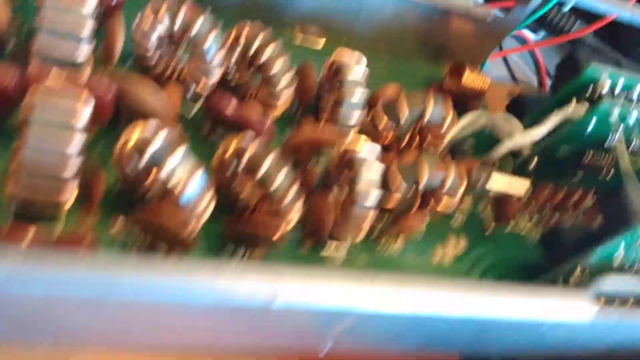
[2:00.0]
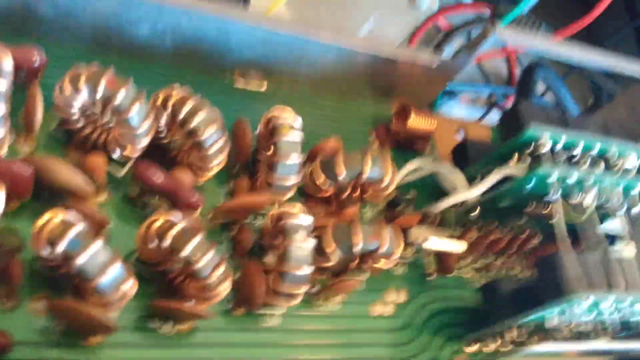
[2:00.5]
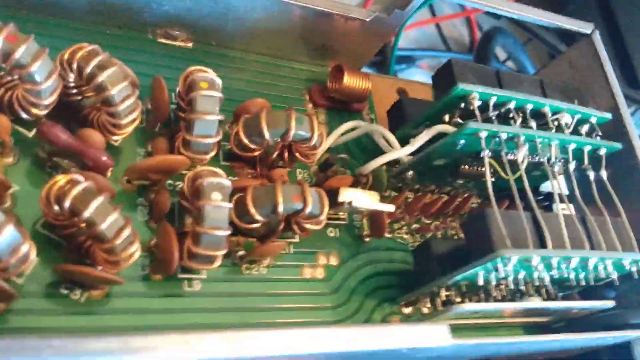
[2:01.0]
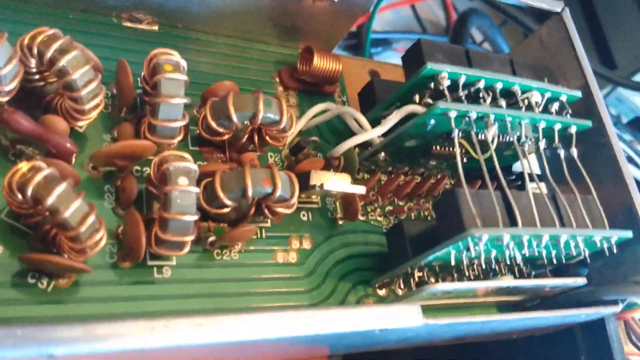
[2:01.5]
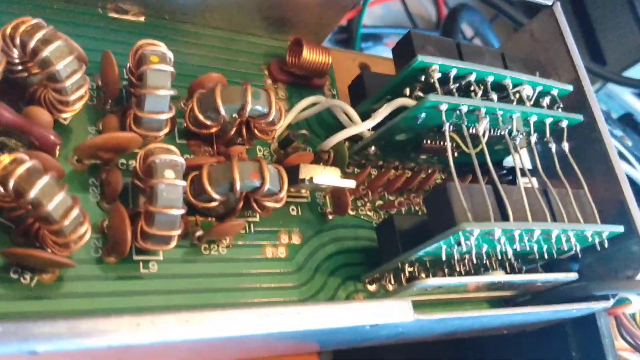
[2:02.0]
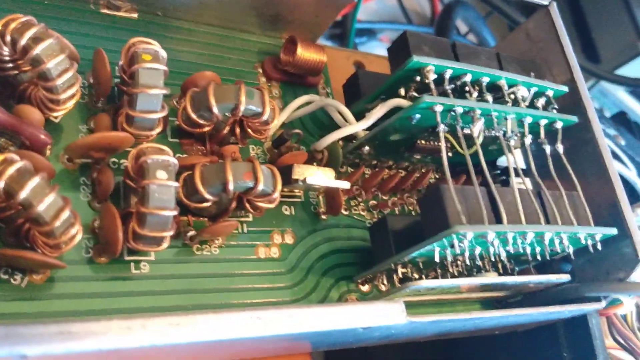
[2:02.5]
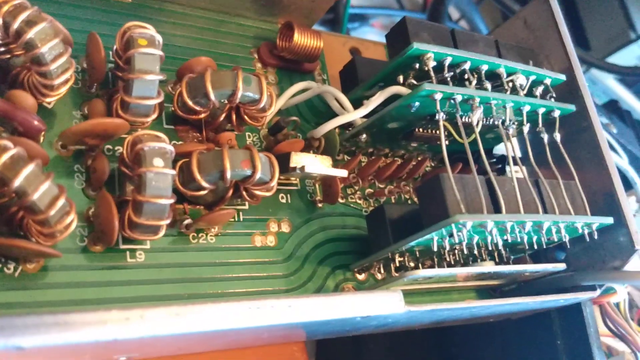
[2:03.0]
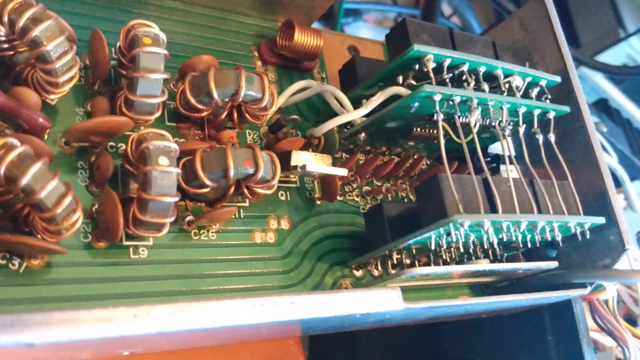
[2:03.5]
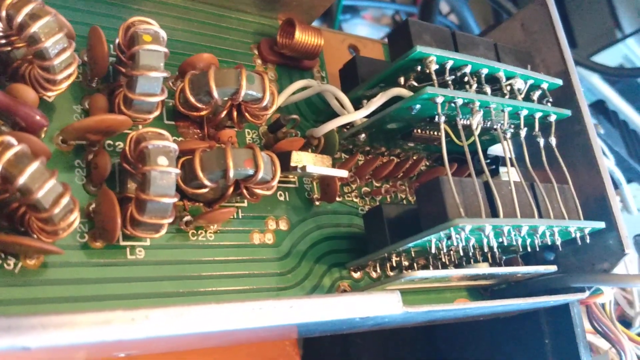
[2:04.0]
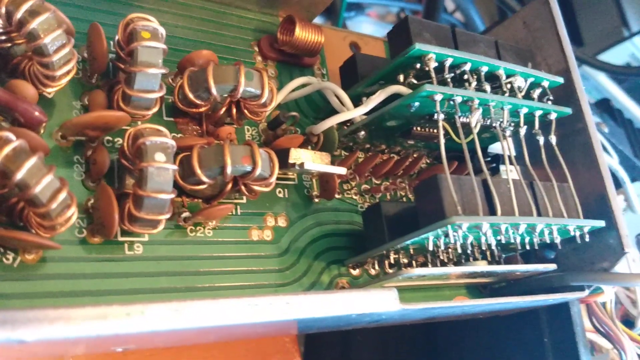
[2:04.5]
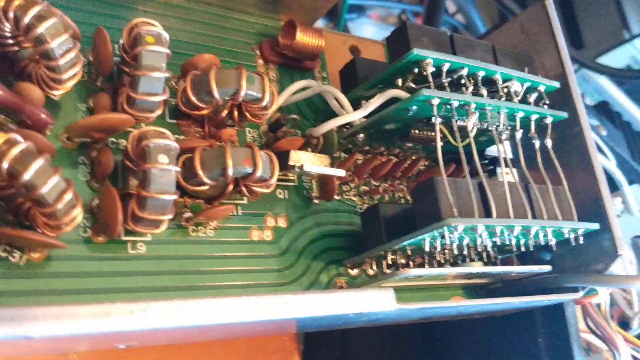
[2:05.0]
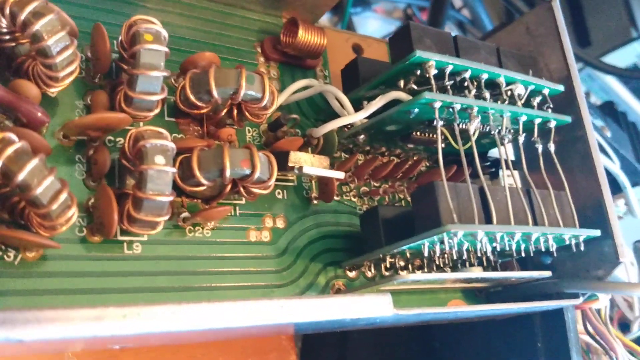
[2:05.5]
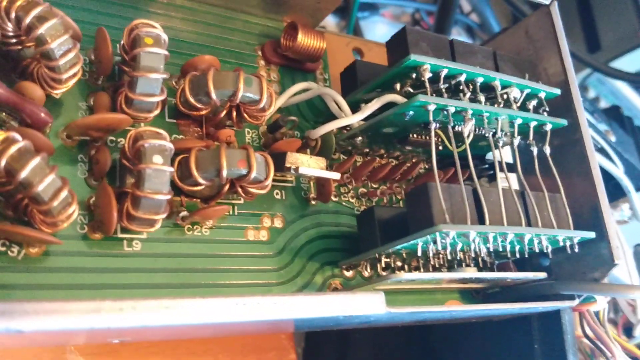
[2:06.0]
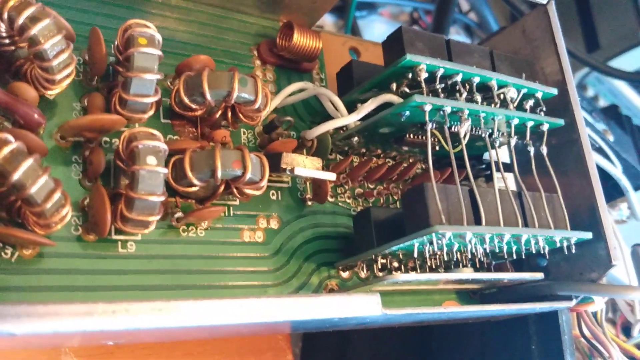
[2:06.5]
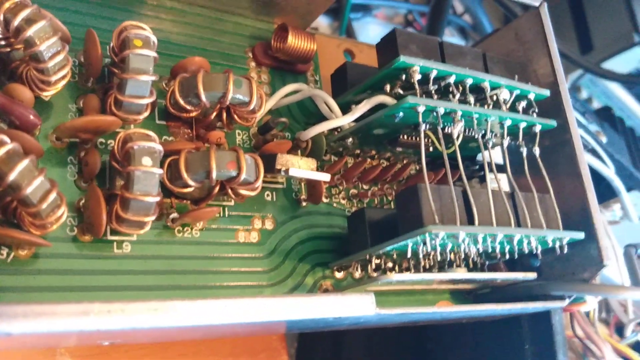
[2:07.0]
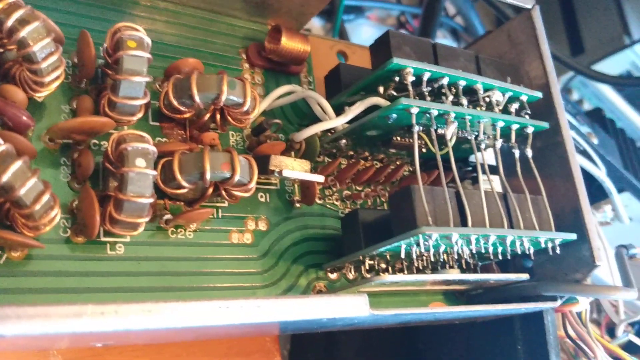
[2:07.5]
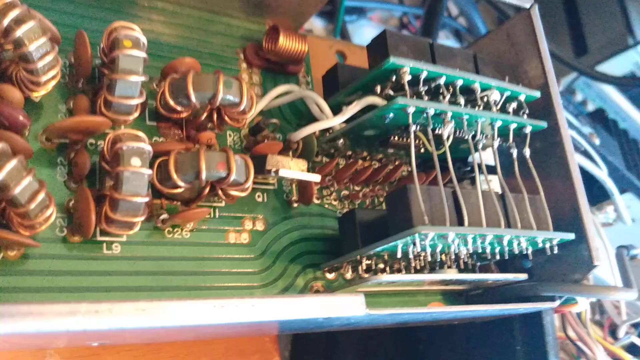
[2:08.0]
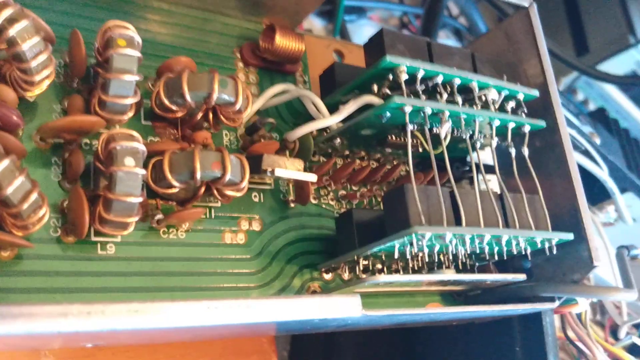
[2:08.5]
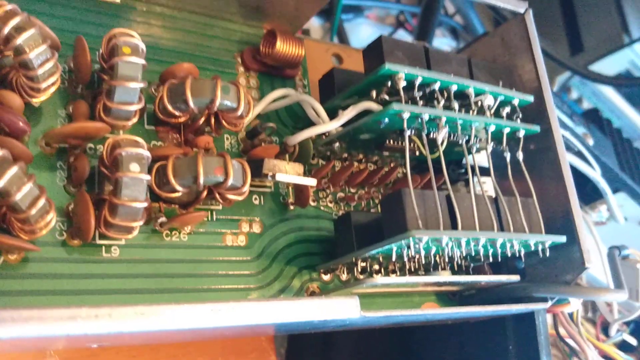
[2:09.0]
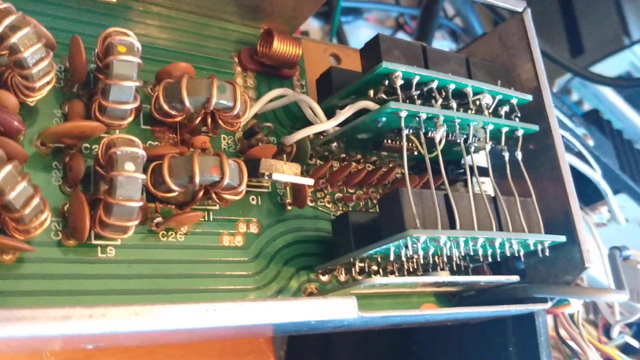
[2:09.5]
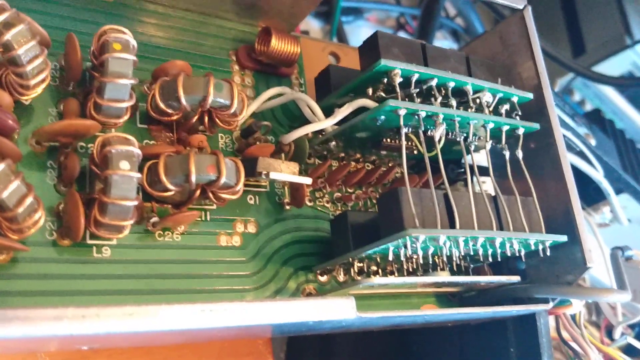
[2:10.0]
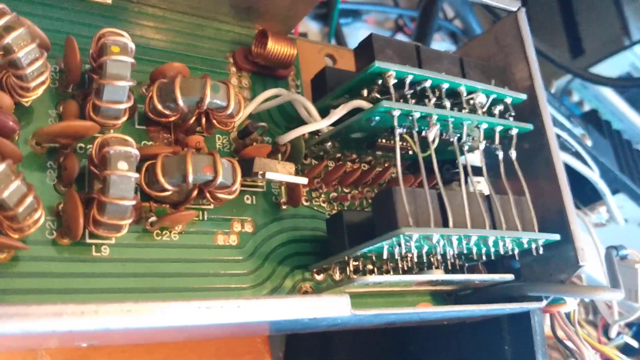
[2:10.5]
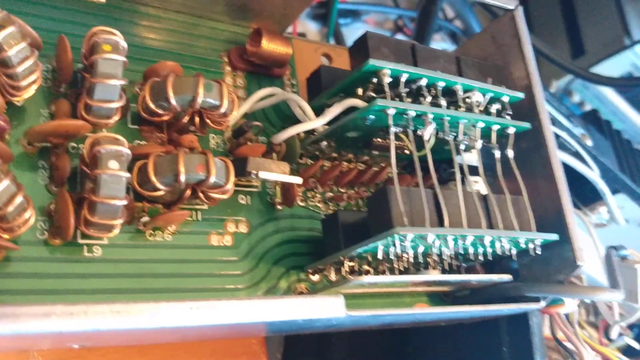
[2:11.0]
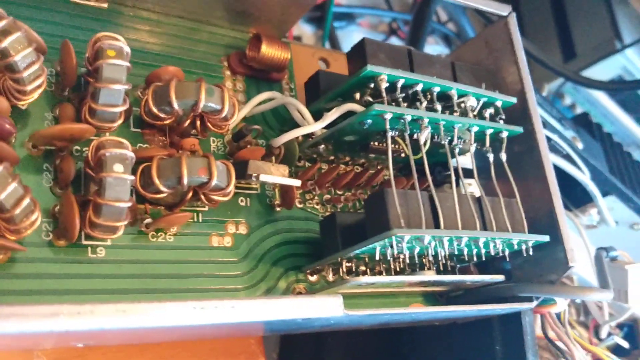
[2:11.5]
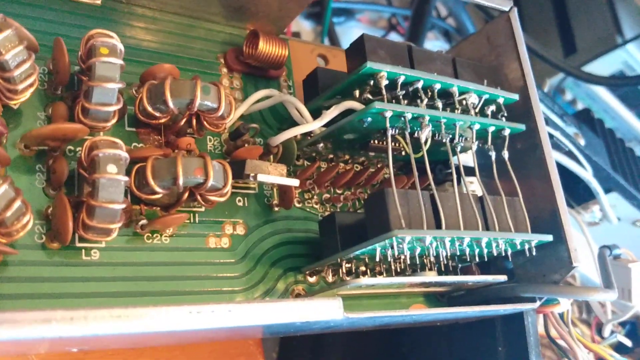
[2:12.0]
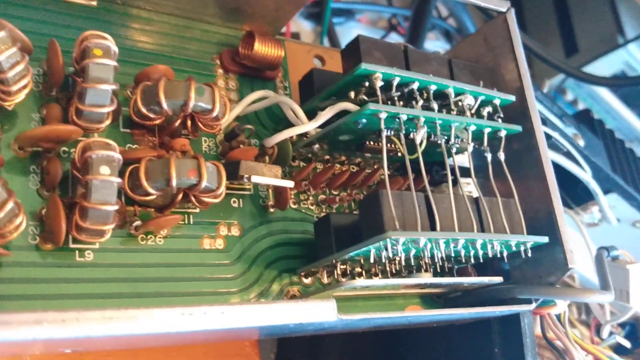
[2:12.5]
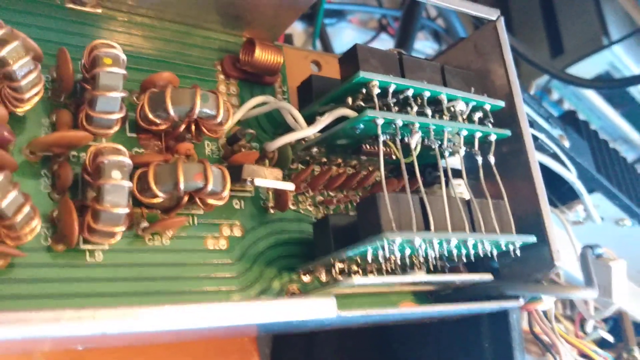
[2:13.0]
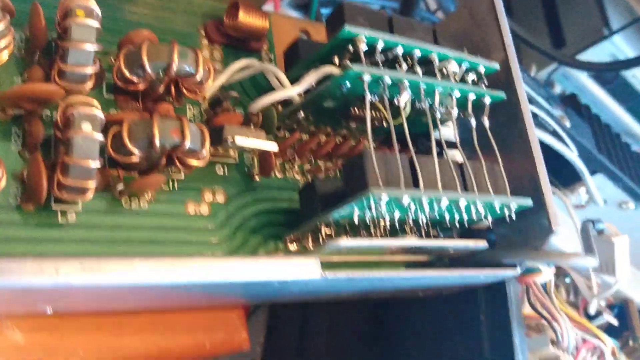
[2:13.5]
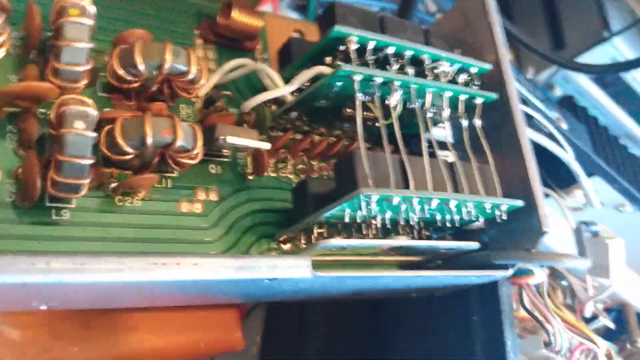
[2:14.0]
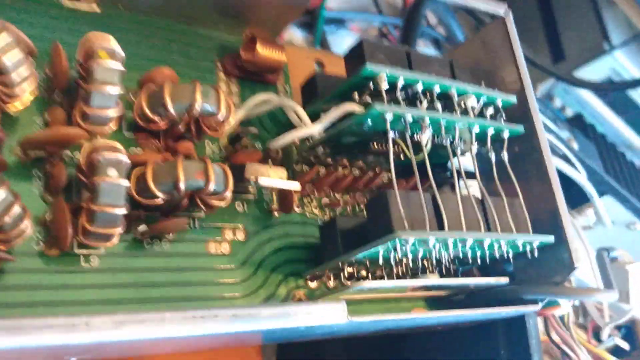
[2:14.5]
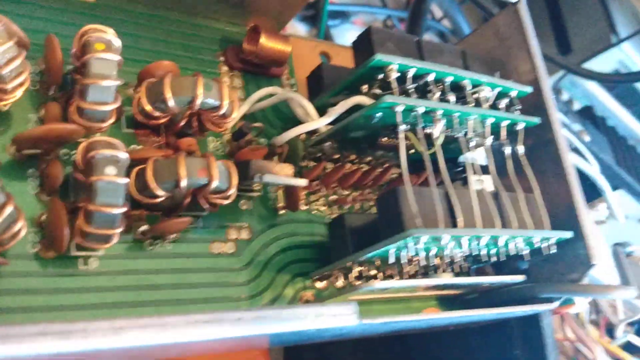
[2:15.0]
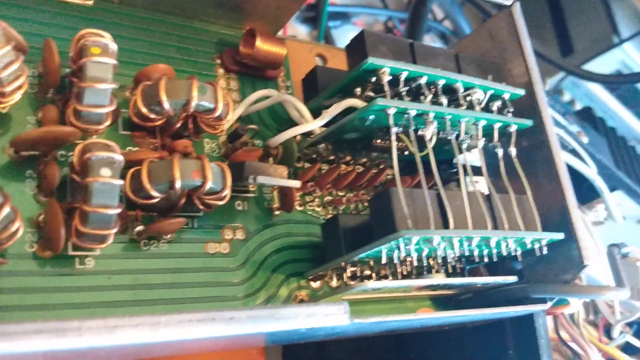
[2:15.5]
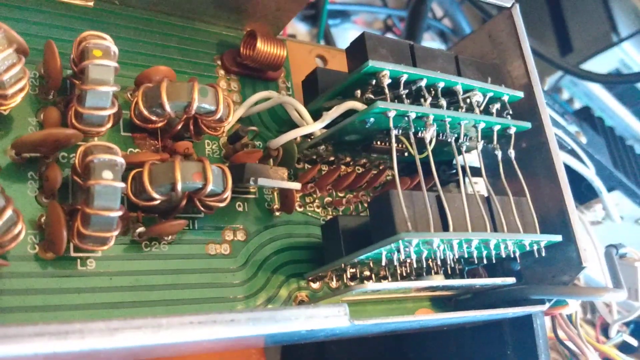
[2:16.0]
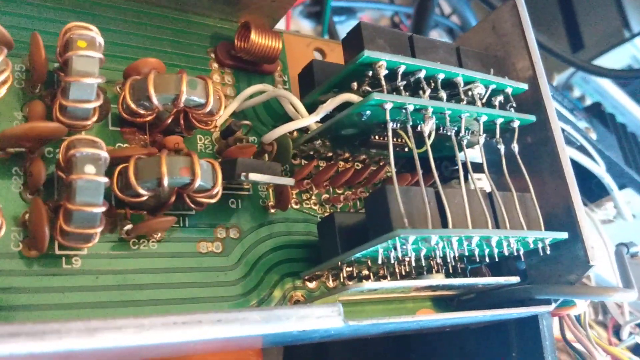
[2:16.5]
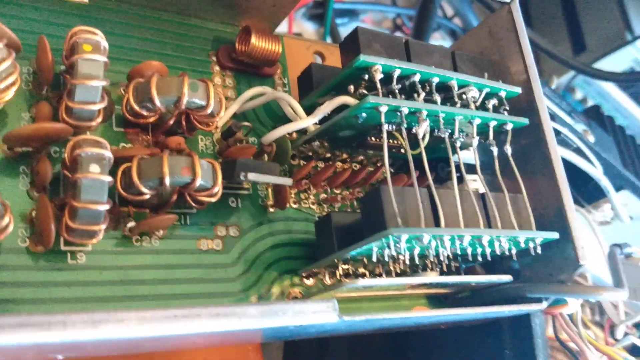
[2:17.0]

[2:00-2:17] The view returns to the silver metal box holding the circuit board with the magnet doughnuts, copper wires and parallel circuit boards. The camera hovers over this view, showing the inside. The box is made of sheet metal; its left, top and bottom sides are shorter and its right side is taller. A thick white wire appears to come out of the right side of the box and go back down toward the transceiver, suggesting the device may be connected to the transceiver. The box also appears to be missing part of its side in the space above the circuit board, possibly an opening for reaching through to the circuit board.